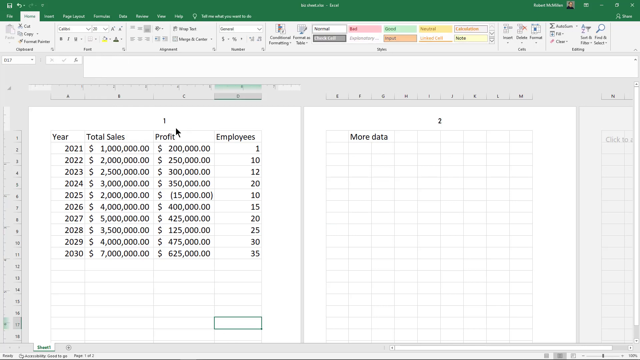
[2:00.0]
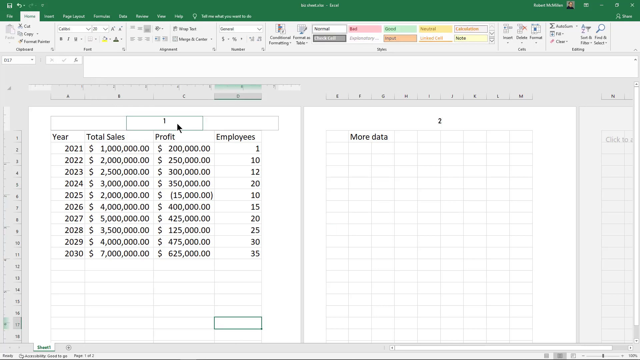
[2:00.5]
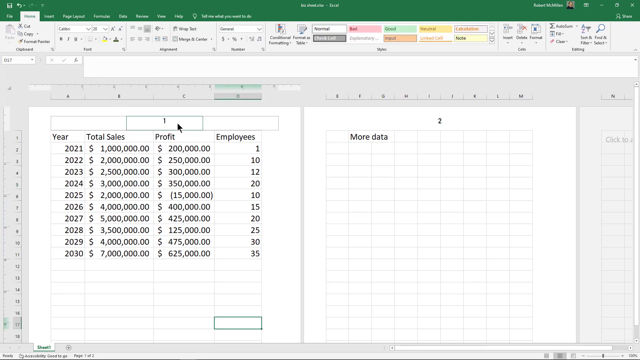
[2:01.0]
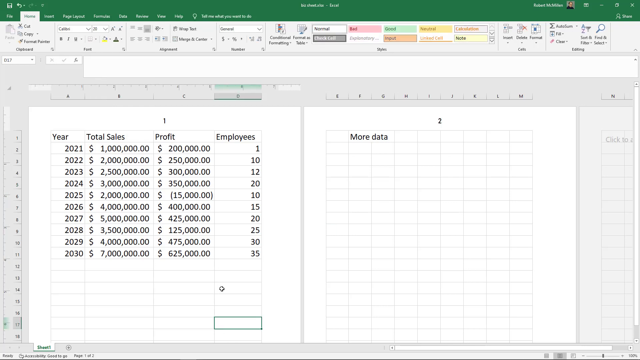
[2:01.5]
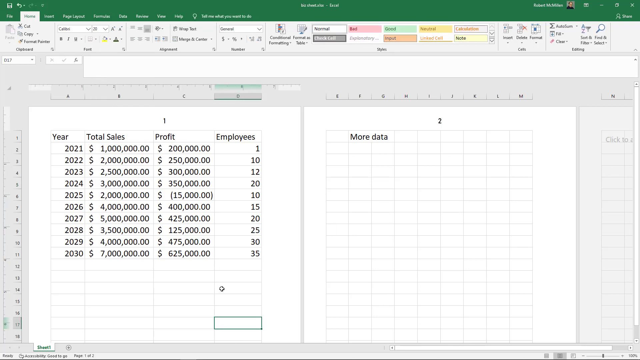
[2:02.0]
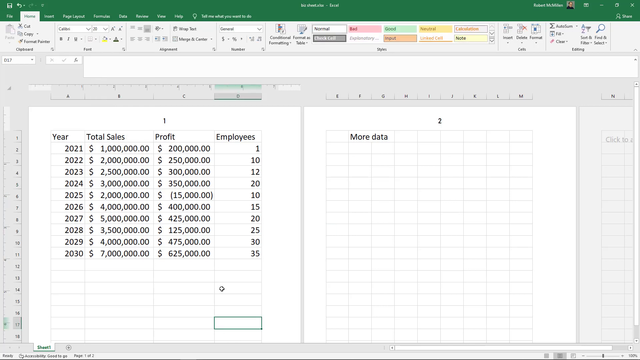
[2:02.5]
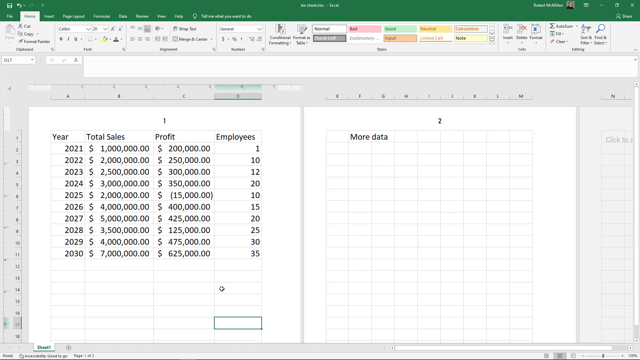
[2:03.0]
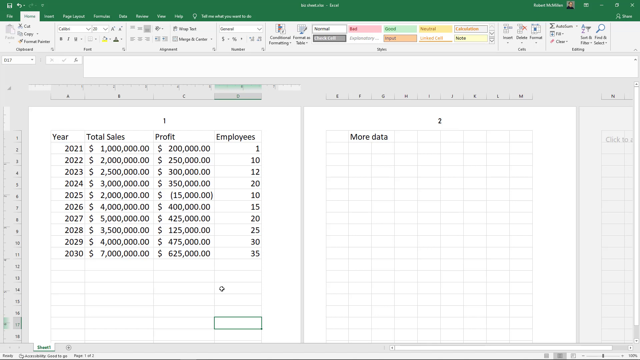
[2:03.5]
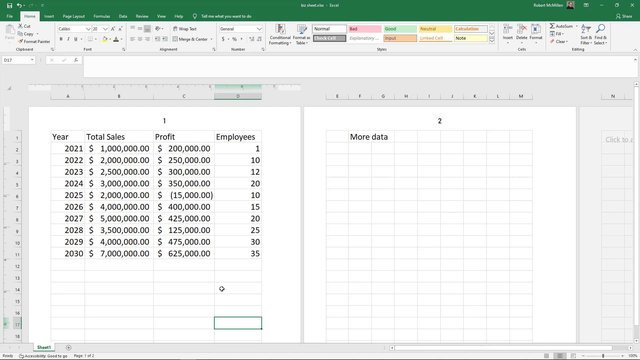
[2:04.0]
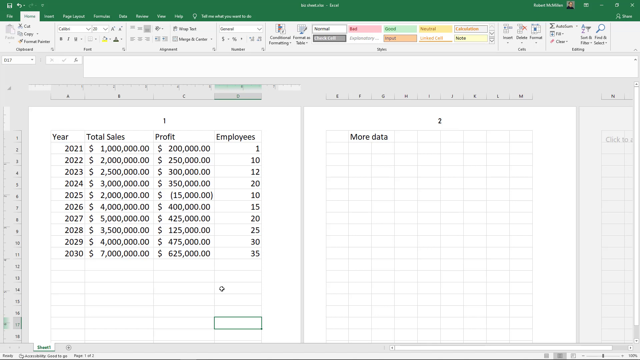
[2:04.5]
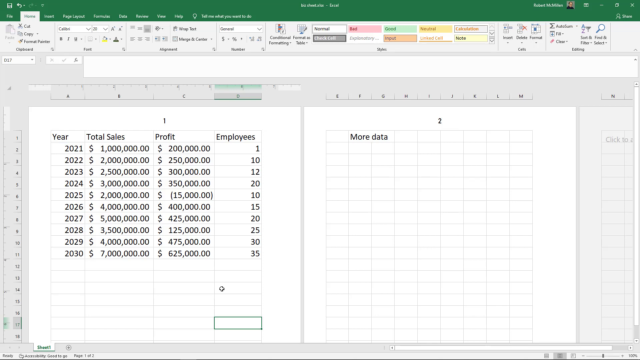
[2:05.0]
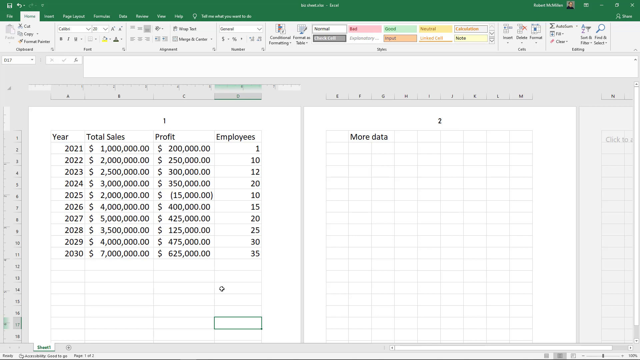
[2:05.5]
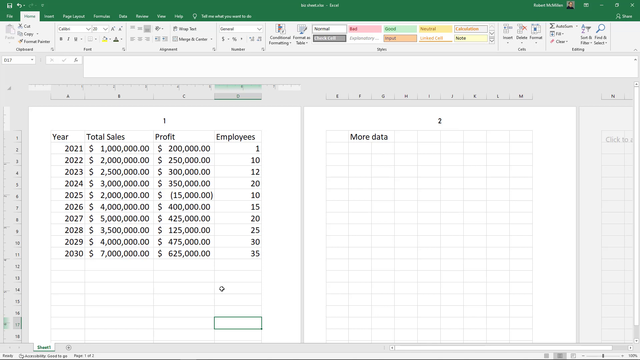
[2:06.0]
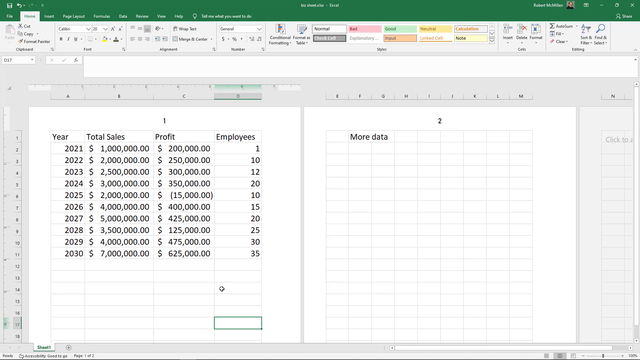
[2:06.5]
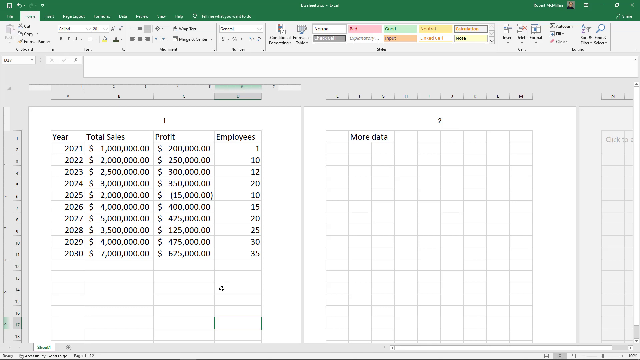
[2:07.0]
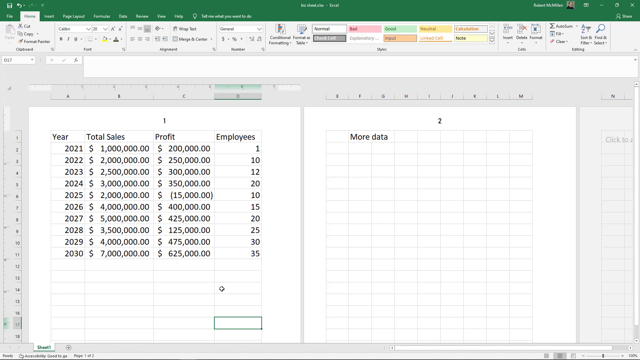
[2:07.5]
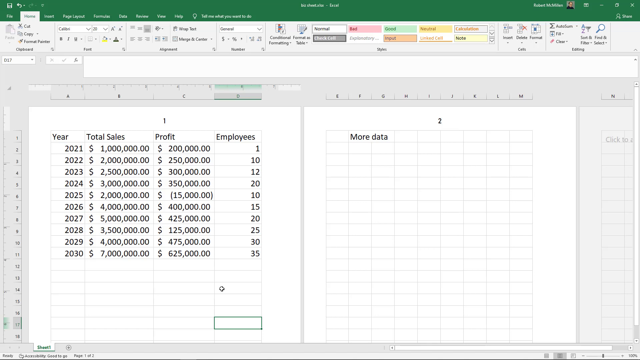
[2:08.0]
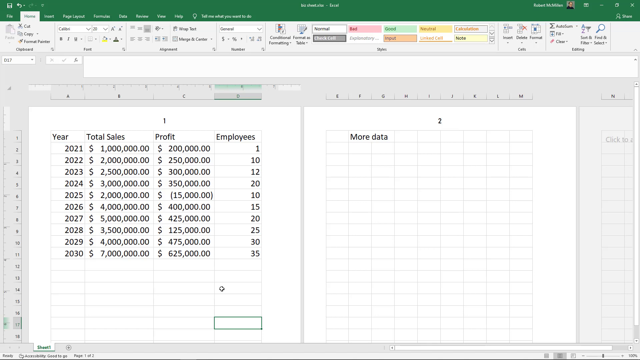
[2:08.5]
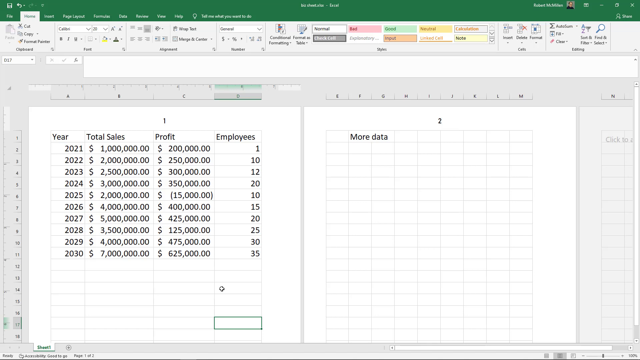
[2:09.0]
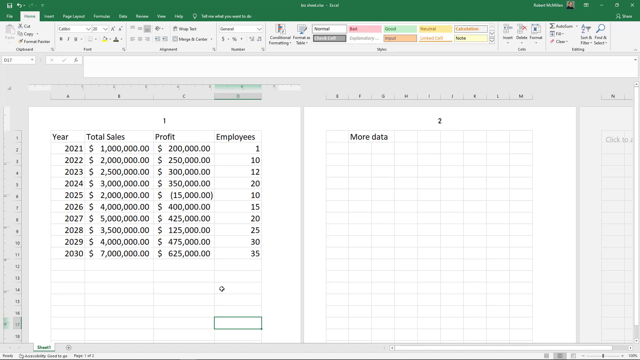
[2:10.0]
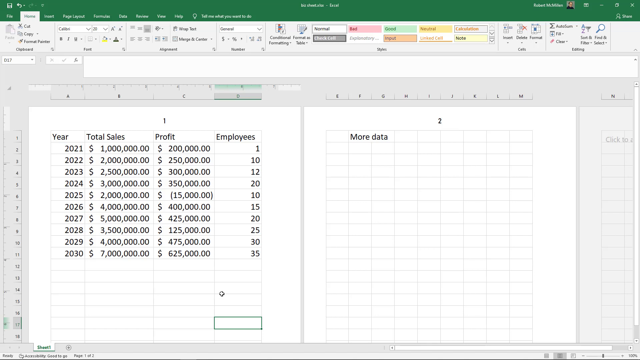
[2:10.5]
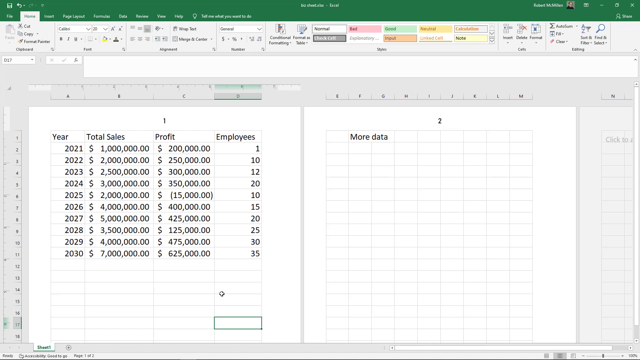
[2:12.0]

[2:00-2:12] A spreadsheet is split into two spreadsheets with a divider between them. The one on the left is filled all the way to the 11th line, while the one on the right has only the first line filled in, reading "more data" in black text. On the left, the categories are "year", "total sales", "profit" and "employees". The years run from 2021 down to 2030, total sales start at a million and finish at 7 million, profits start at 200,000 and end at 625,000, and employees start at one and end at 35 for the year 2030.